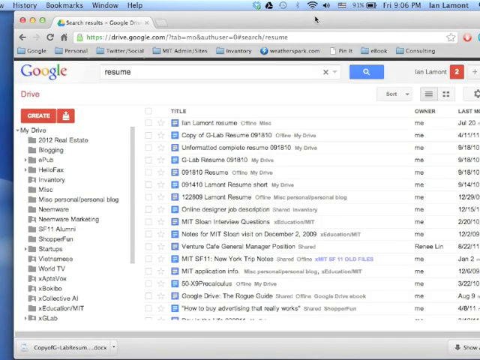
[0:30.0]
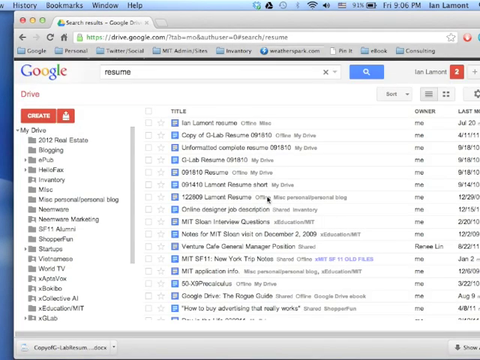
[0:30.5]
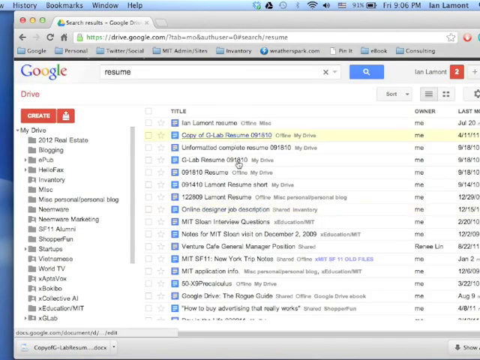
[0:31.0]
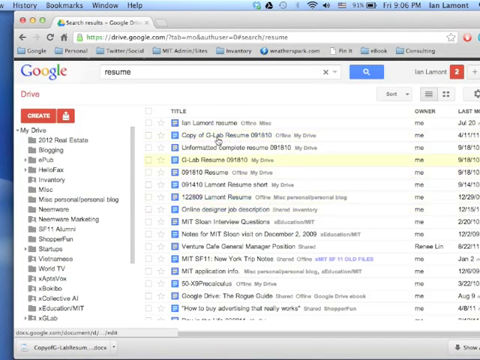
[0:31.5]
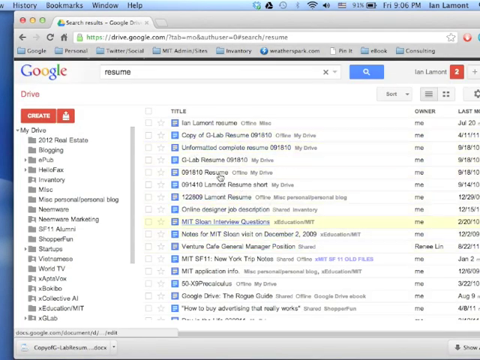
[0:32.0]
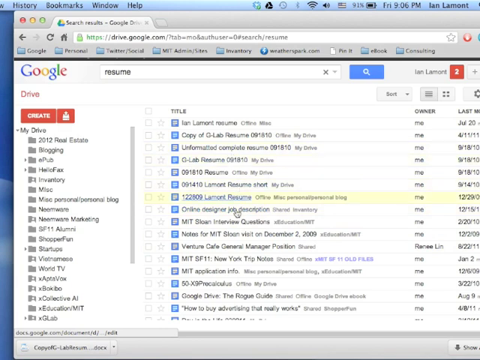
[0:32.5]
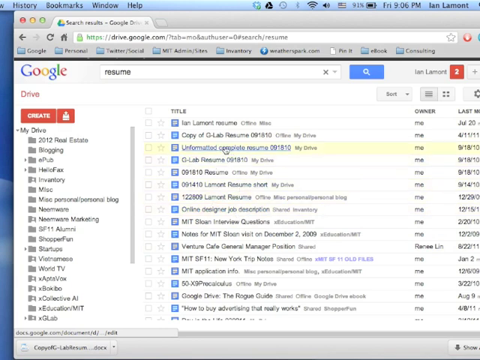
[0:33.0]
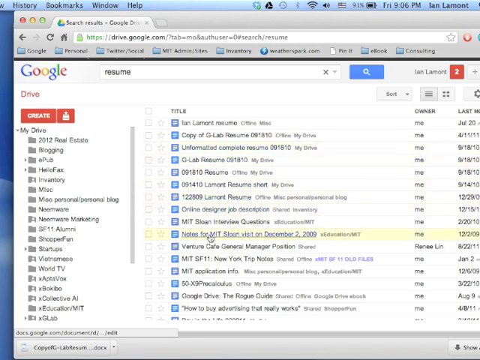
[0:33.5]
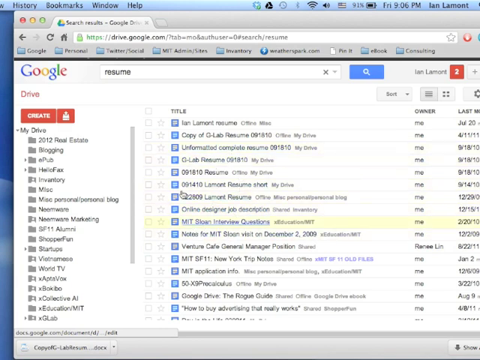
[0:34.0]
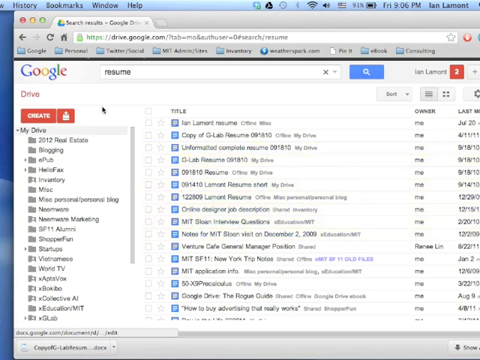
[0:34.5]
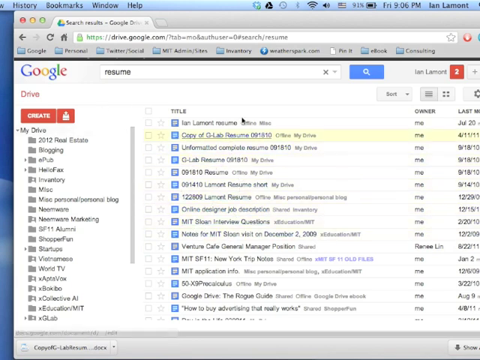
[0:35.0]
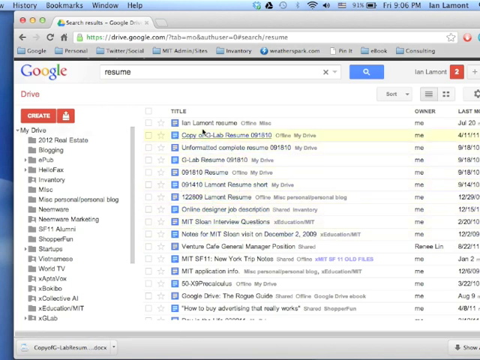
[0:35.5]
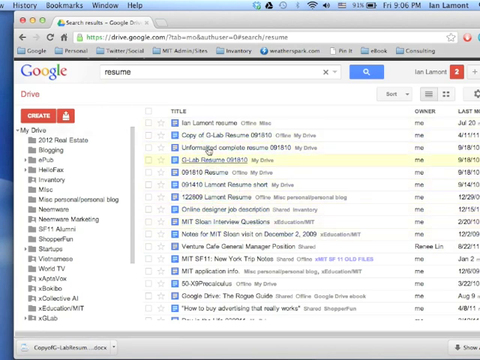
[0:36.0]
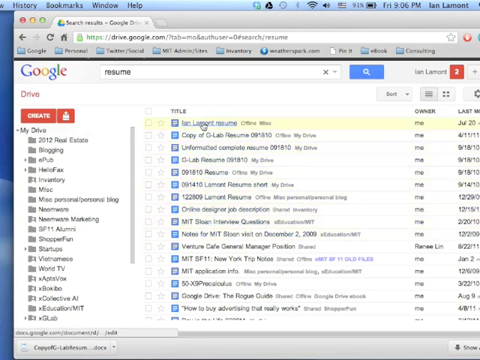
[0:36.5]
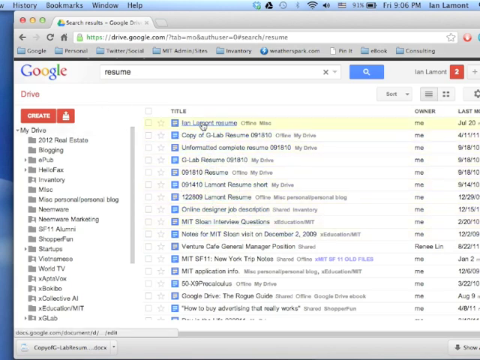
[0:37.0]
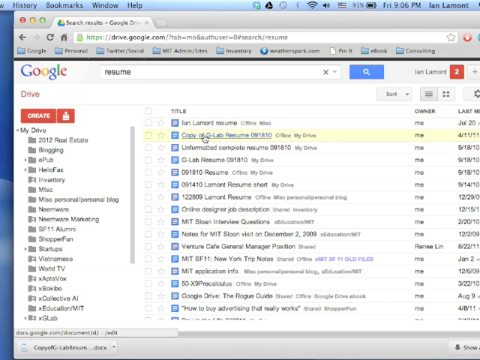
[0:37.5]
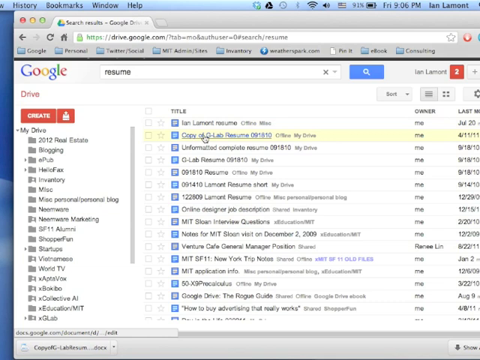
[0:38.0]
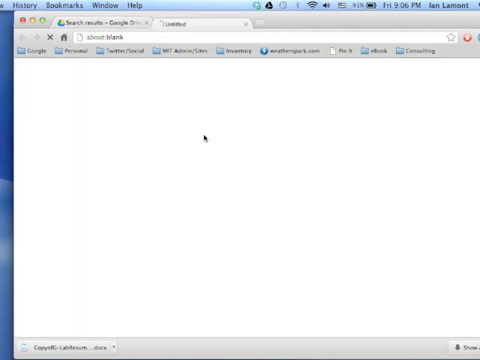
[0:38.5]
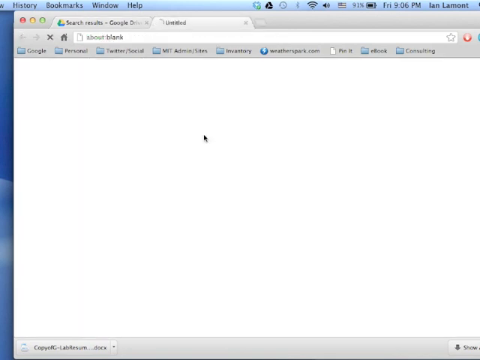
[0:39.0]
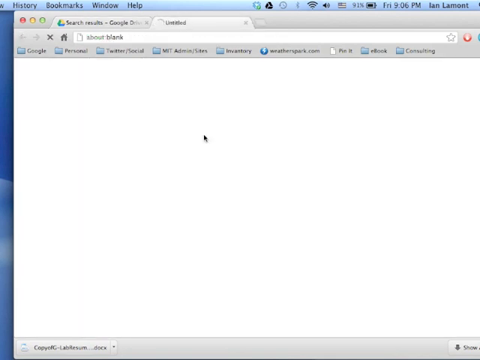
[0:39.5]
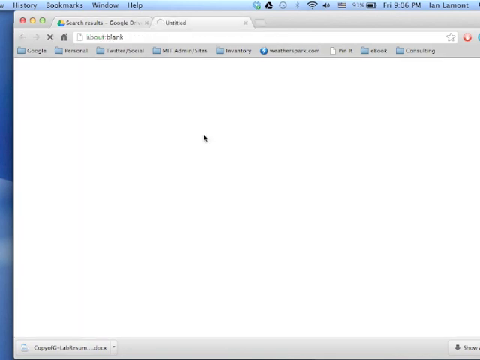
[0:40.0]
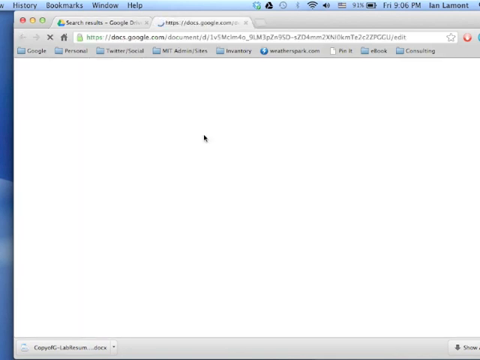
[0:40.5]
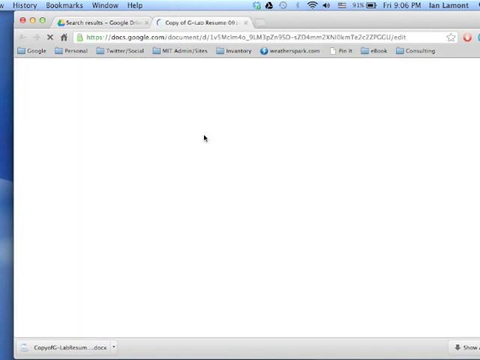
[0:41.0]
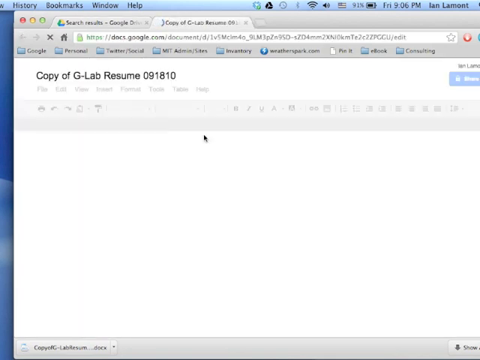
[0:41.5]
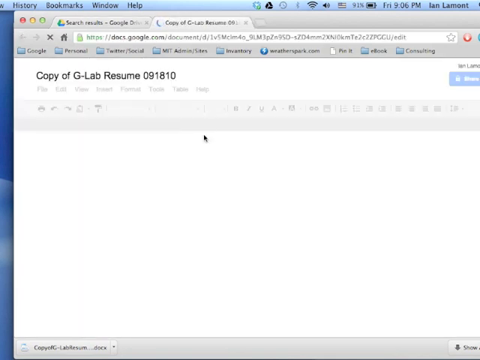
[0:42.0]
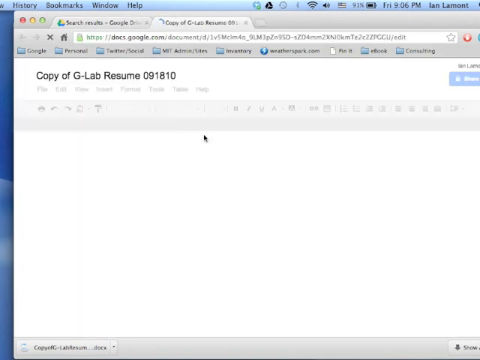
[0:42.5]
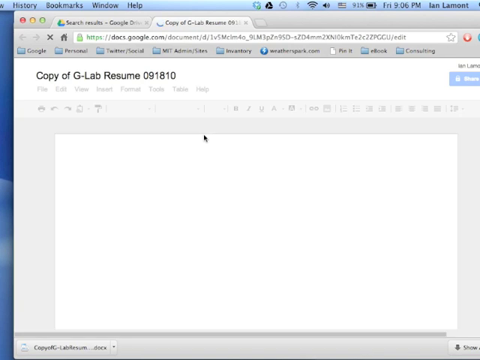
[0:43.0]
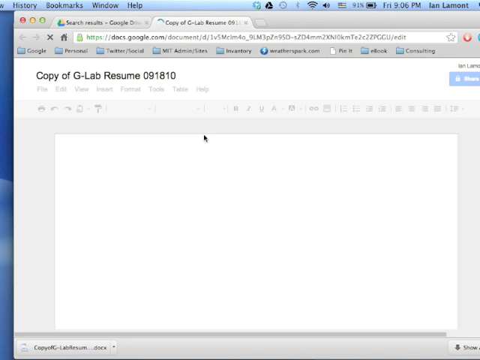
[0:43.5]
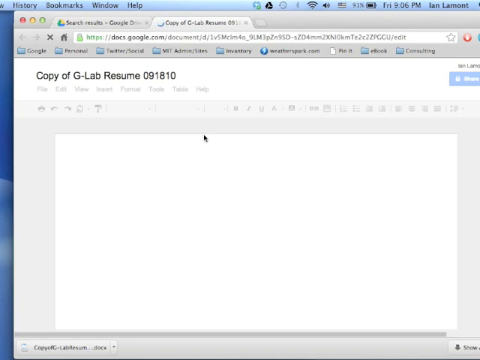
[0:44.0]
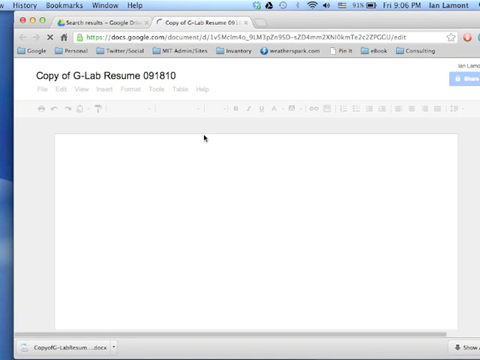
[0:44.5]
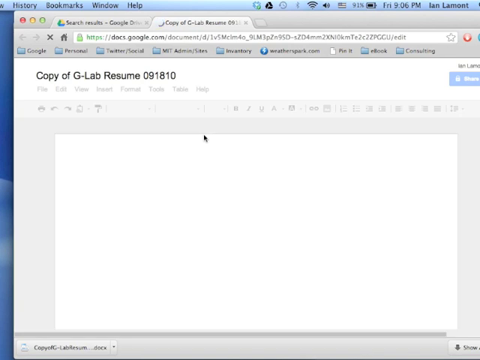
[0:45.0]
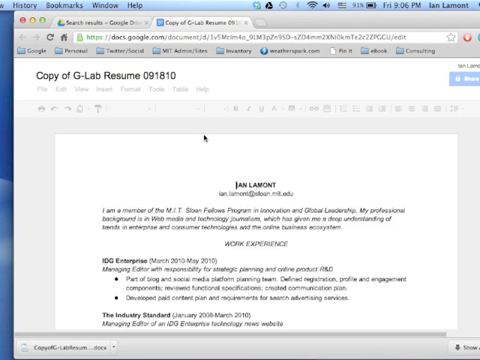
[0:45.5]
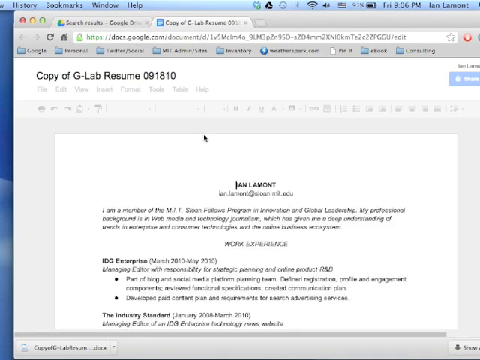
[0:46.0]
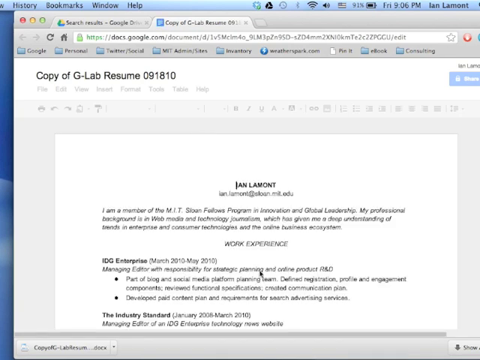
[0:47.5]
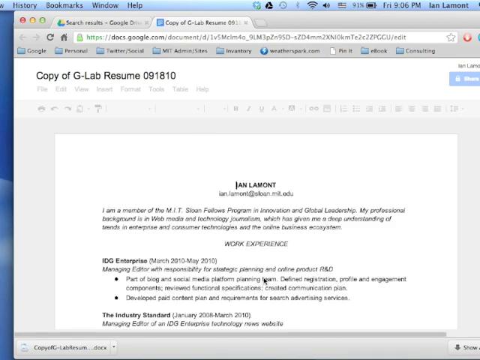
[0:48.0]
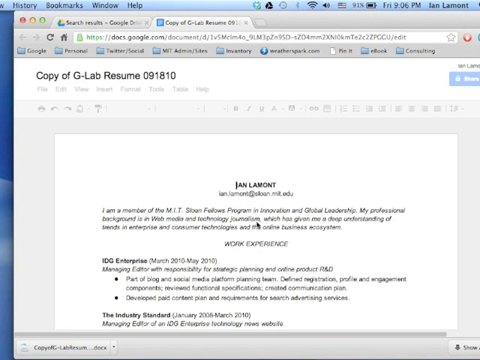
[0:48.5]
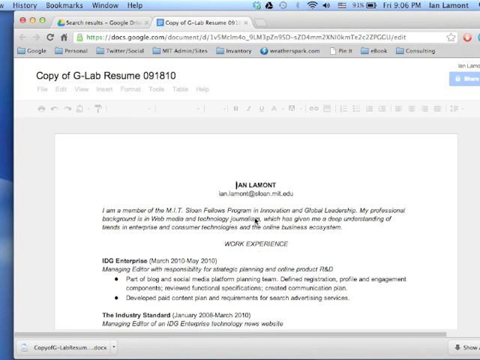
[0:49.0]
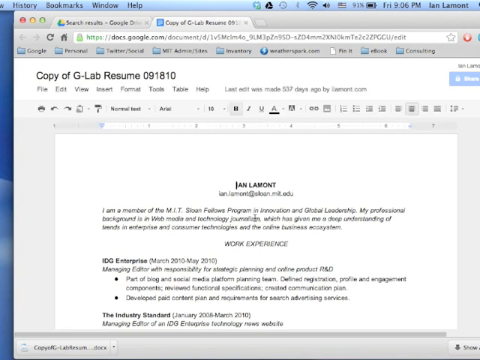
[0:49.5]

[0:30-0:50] A page with a document opened appears. At the top left of the screen are the menu items "history", "bookmarks", "window" and "help", and at the top right are the time, "Ian Lamont", a Wi-Fi sign and various other signs. Below, the page is on Google, with a search box. The screen shows many documents; on the left side are "drive" and "create" in red, followed by "my drive", and many other document titles are listed. The mouse moves from one document to another and clicks the second document on the list, titled "copy of g lab resume 0 9 1 8 1 0". At the top it reads "ian".